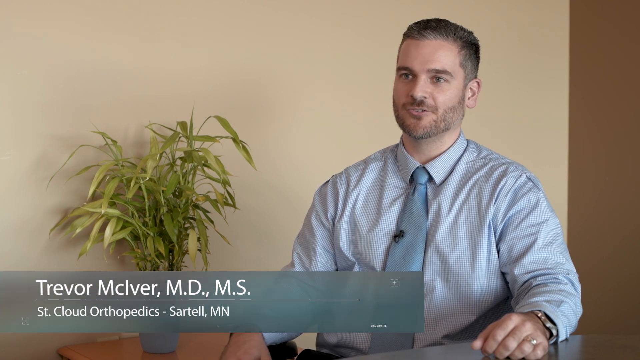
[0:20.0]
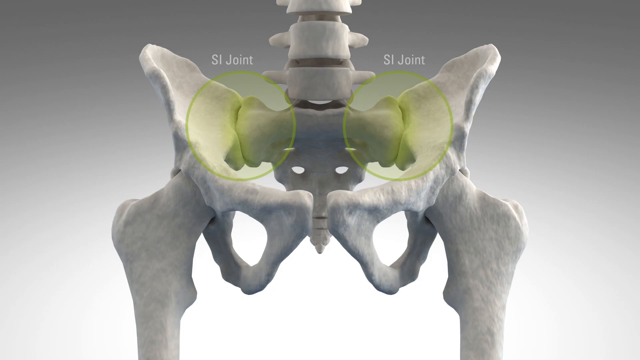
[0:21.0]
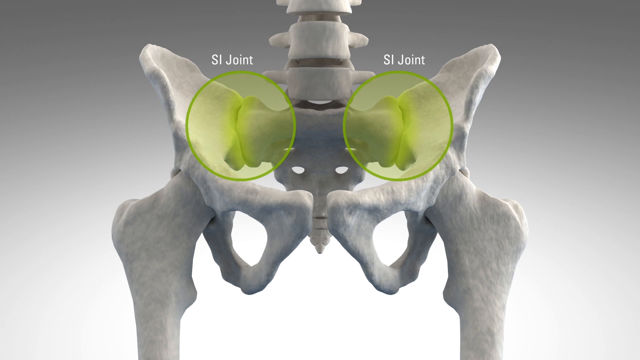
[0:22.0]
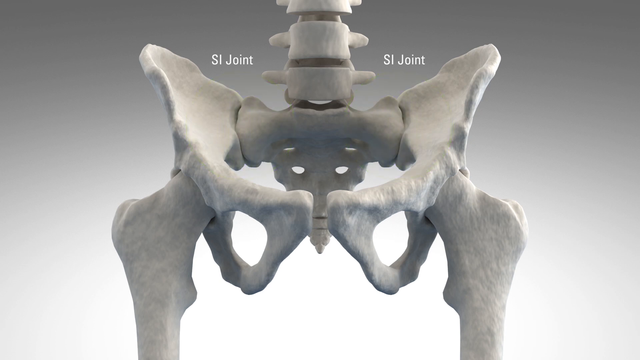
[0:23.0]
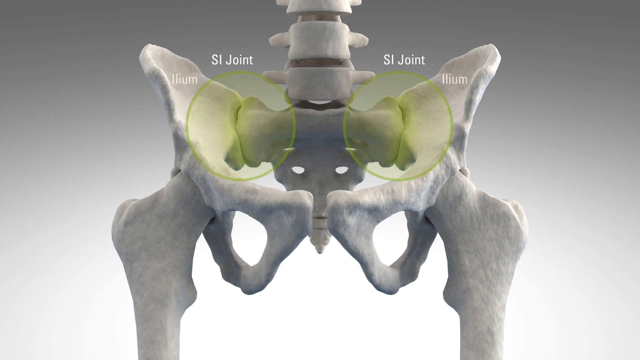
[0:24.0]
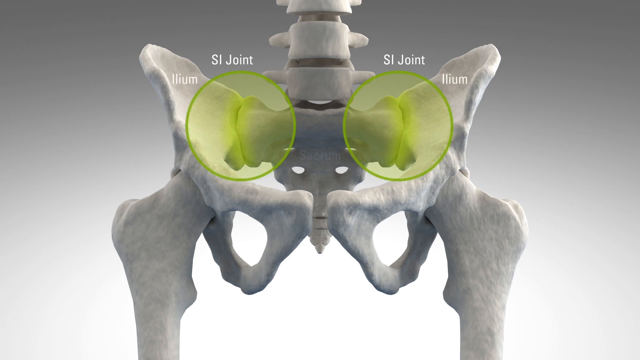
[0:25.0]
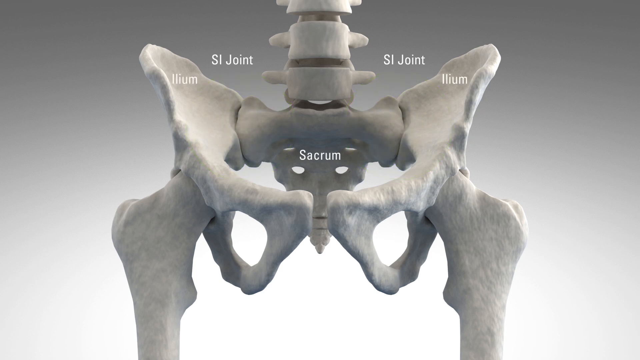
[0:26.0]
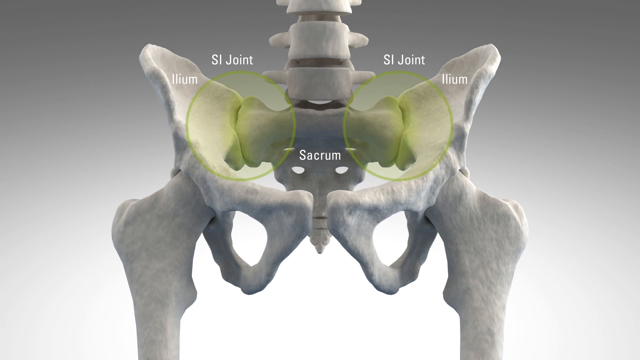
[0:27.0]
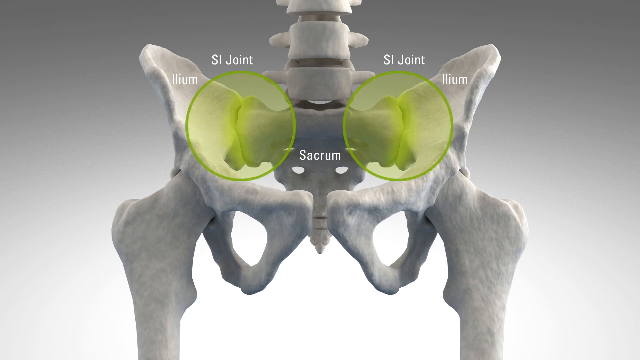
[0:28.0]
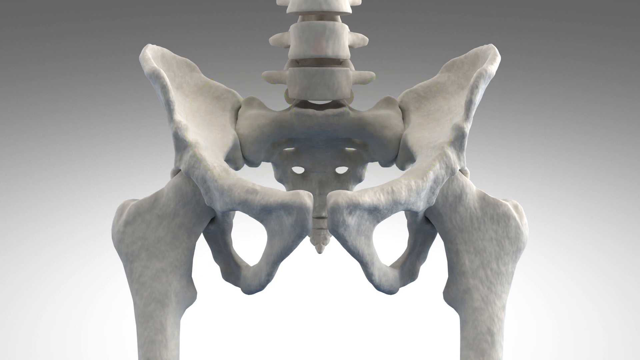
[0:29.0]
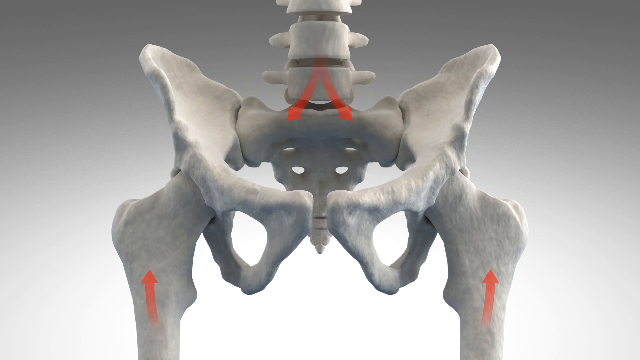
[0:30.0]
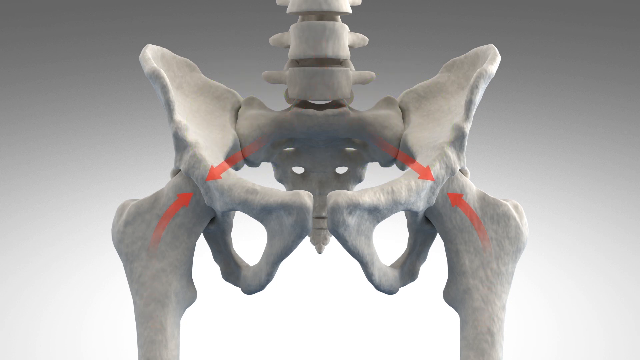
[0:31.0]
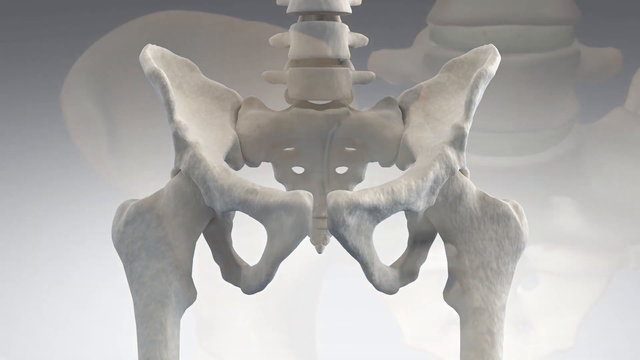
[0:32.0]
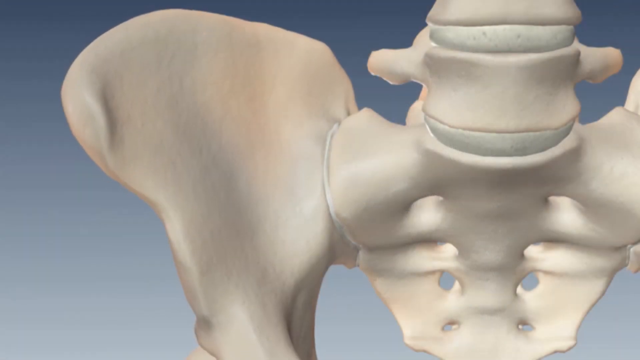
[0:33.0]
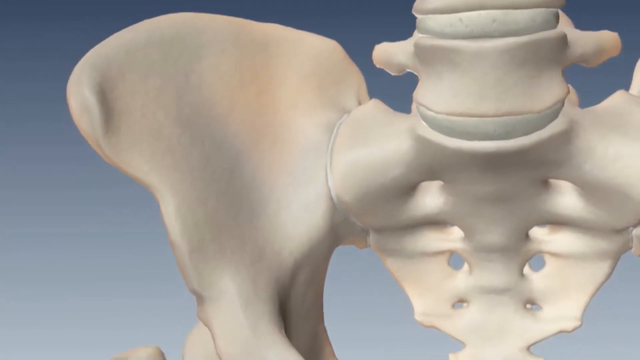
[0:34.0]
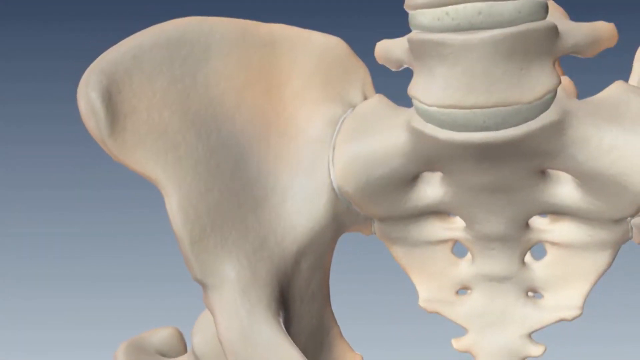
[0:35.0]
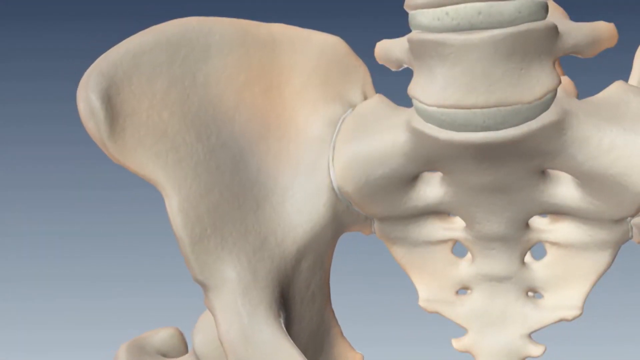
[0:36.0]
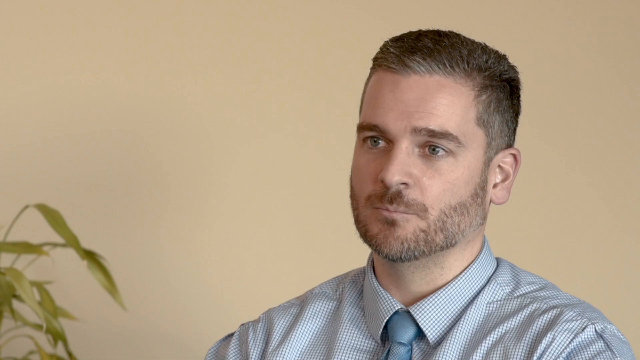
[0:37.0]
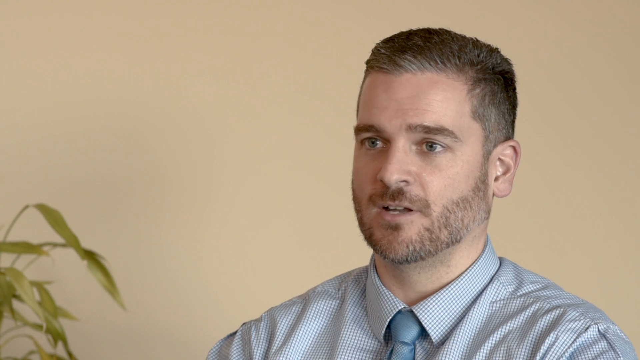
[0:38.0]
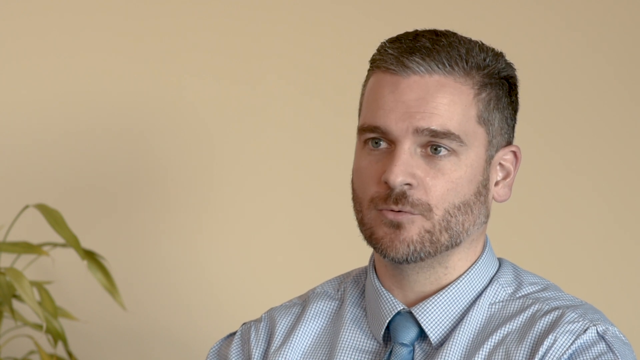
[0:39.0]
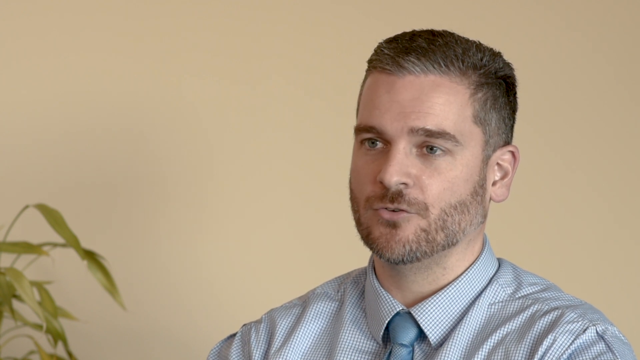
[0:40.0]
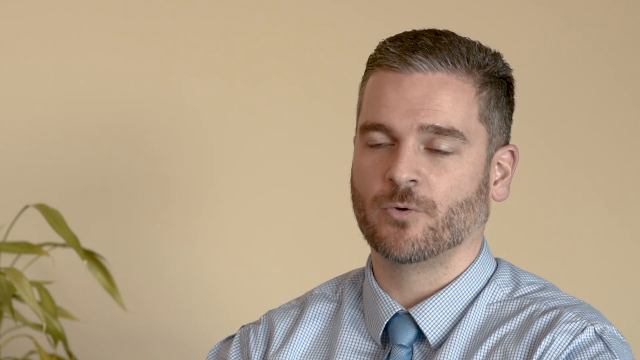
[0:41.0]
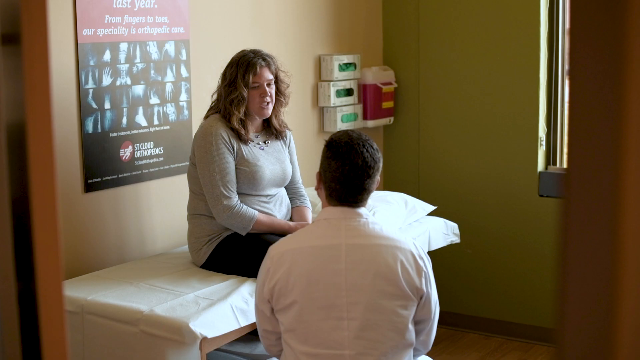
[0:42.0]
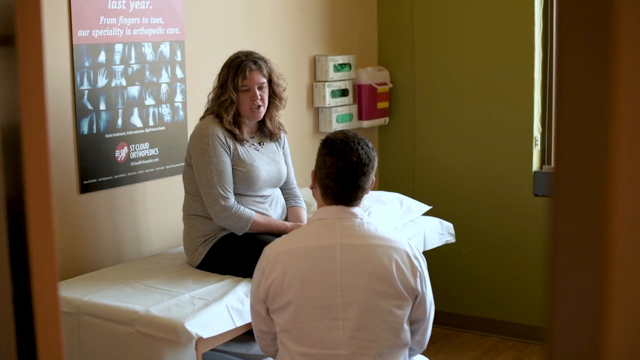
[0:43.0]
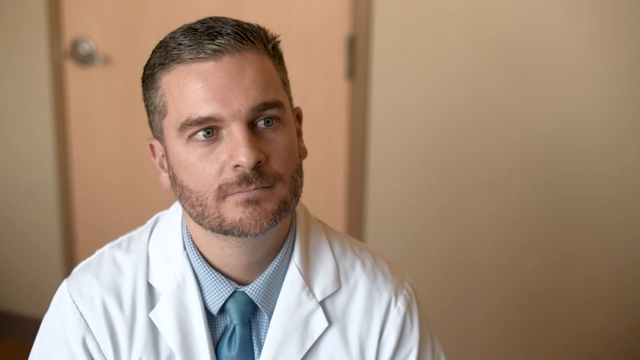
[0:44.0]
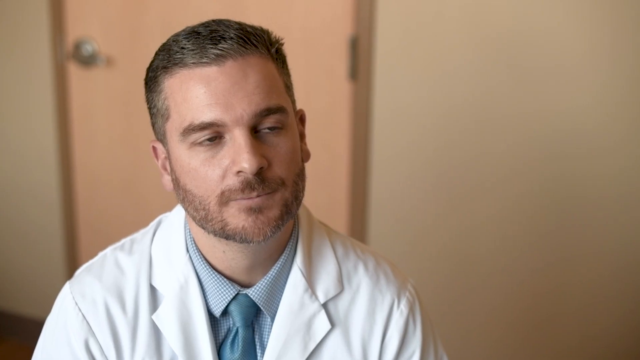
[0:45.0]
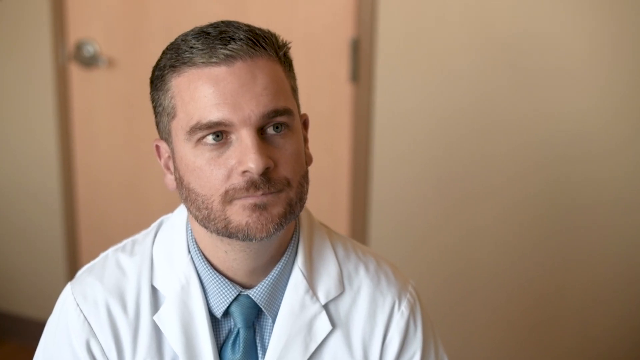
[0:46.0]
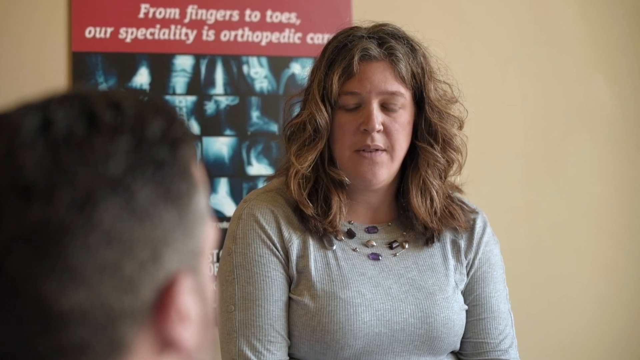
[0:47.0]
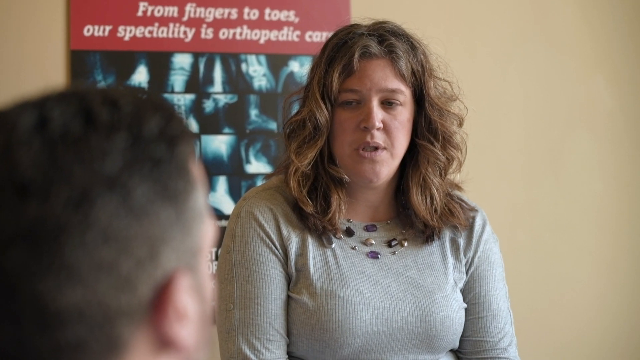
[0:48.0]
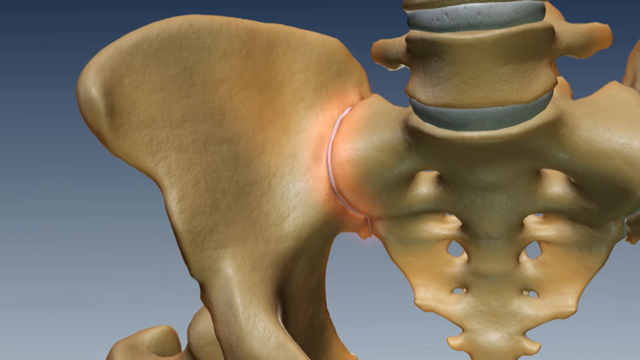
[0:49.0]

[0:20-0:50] The same doctor is talking, with his name still on screen. The video then cuts to an animated skeleton, showing its lower part, with "SI joint" labelled on the left and right sides. Just beneath are greenish yellowish circles; the label by the left circle appears to read "ILIUM", the right circle has the same word, and between the two circles it says "SACRUM". Two red arrows appear, disappear, and then go straight down to the sides where the circles were, and two red arrows come up on the left and right sides, apparently where the hips would be. The left part, possibly the hip bone, moves to the side. The video then returns to the doctor speaking, and he is now speaking to a patient, a woman who is sitting down and has brownish hair.